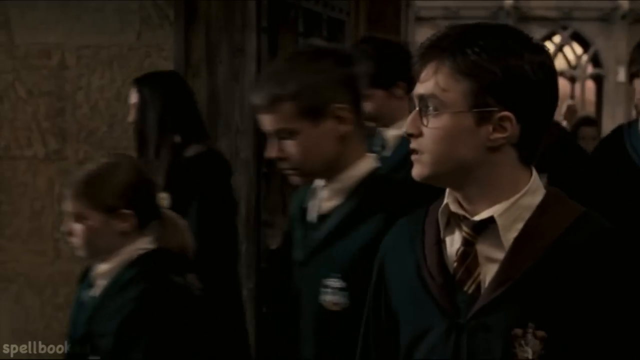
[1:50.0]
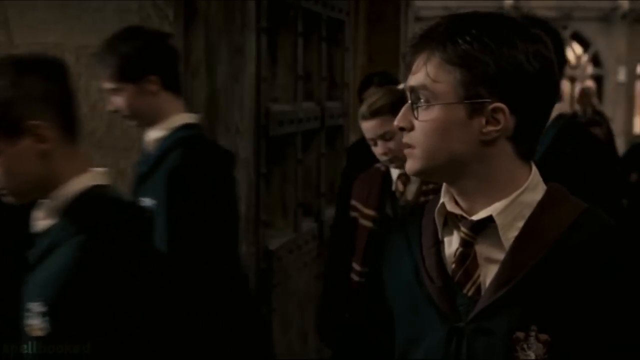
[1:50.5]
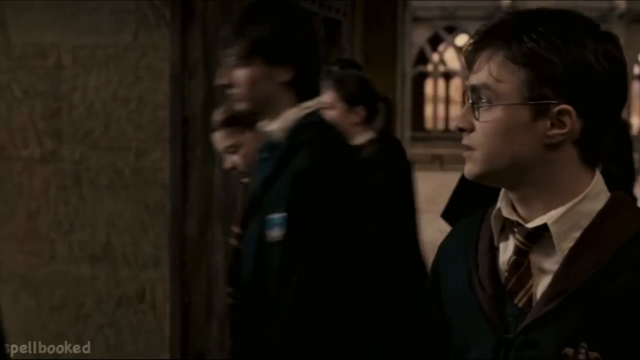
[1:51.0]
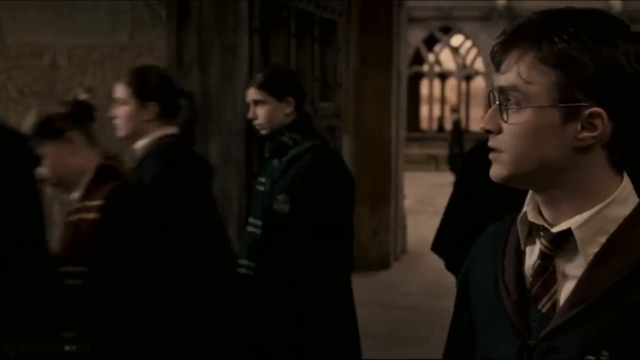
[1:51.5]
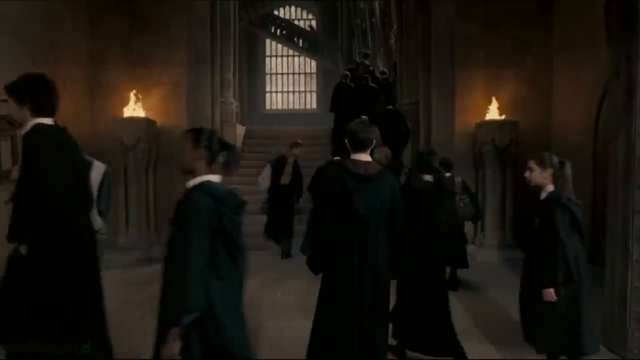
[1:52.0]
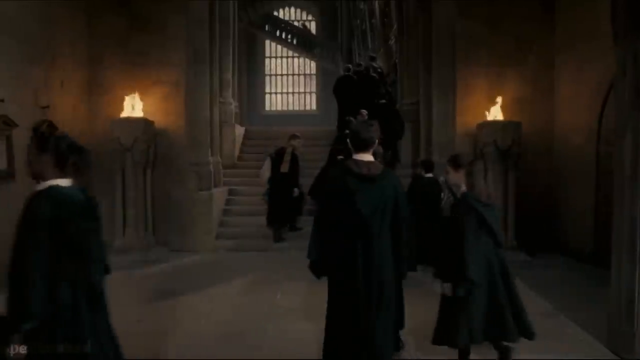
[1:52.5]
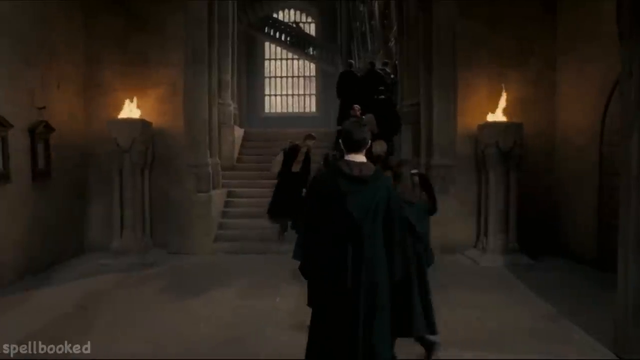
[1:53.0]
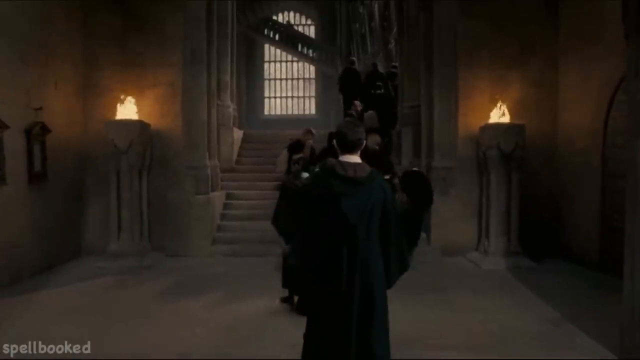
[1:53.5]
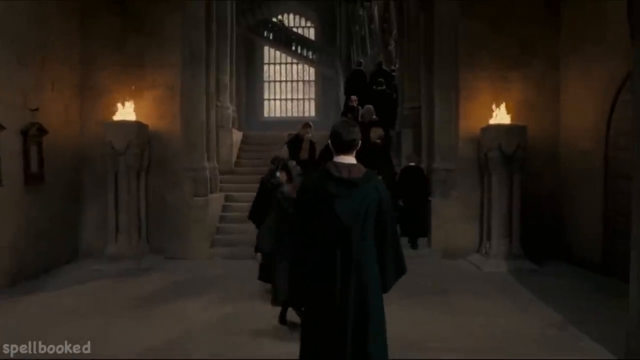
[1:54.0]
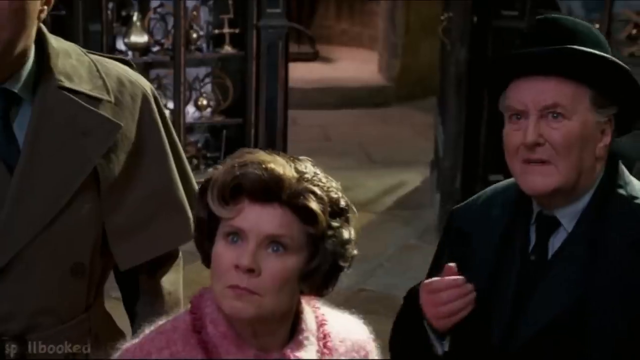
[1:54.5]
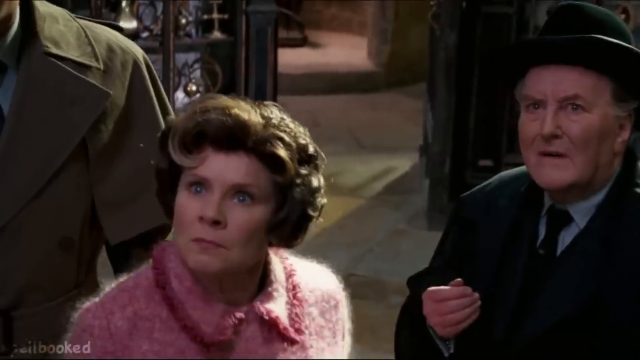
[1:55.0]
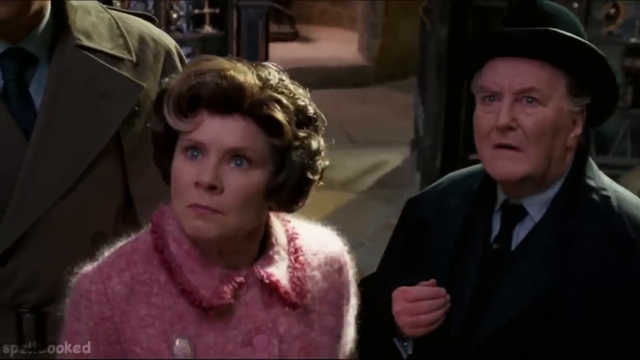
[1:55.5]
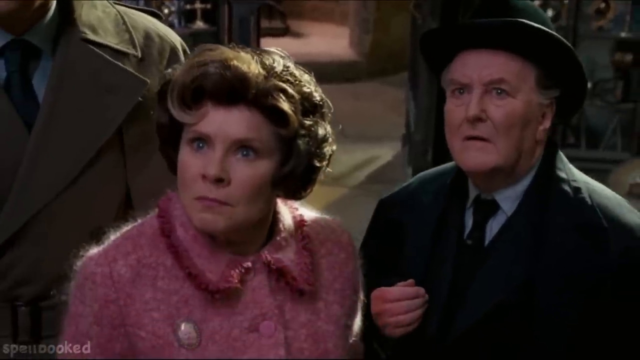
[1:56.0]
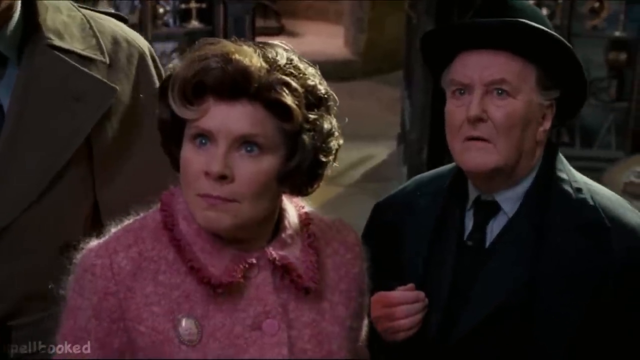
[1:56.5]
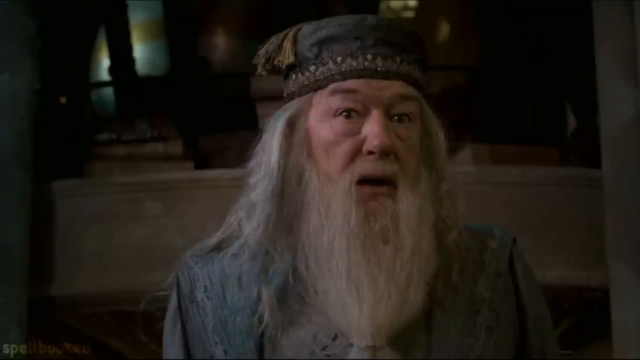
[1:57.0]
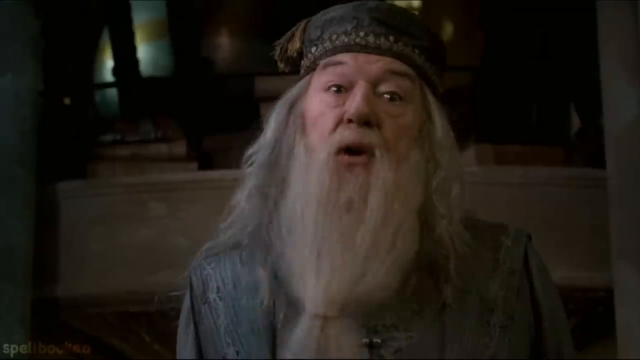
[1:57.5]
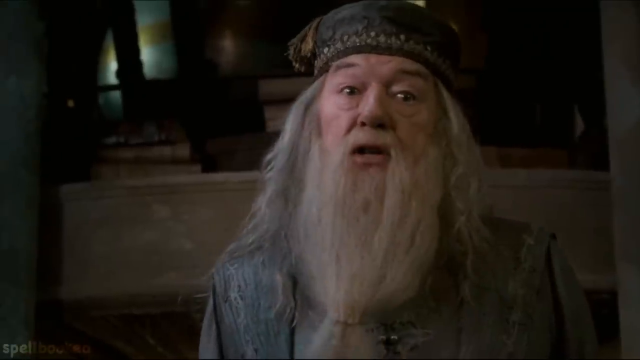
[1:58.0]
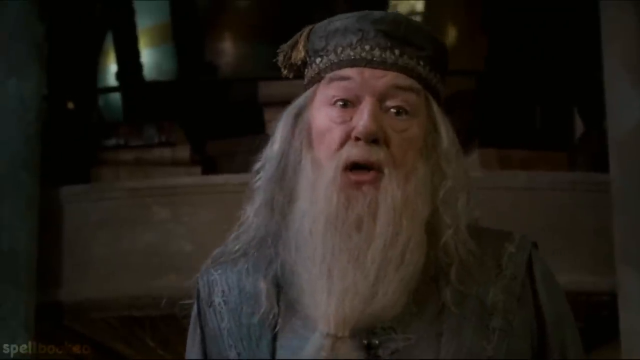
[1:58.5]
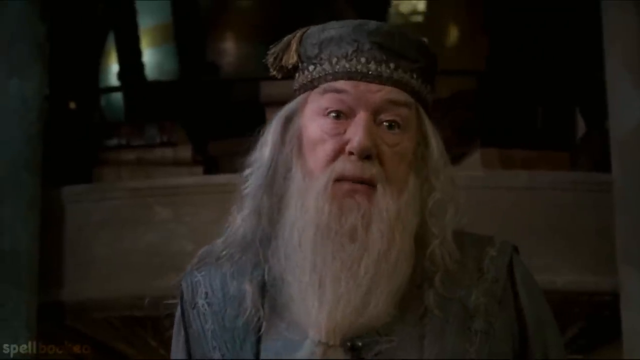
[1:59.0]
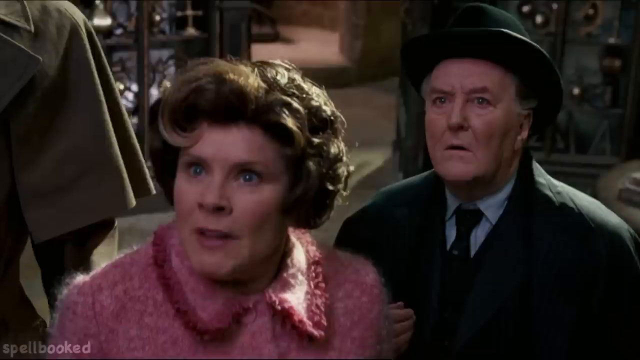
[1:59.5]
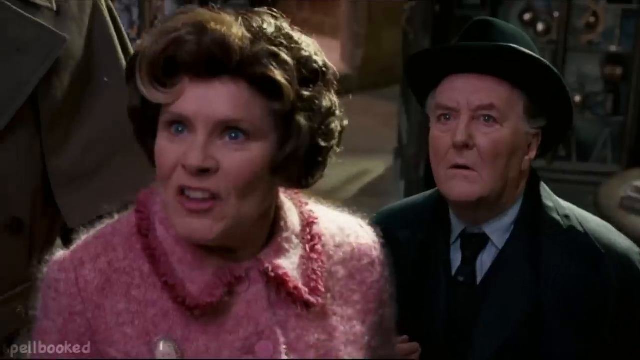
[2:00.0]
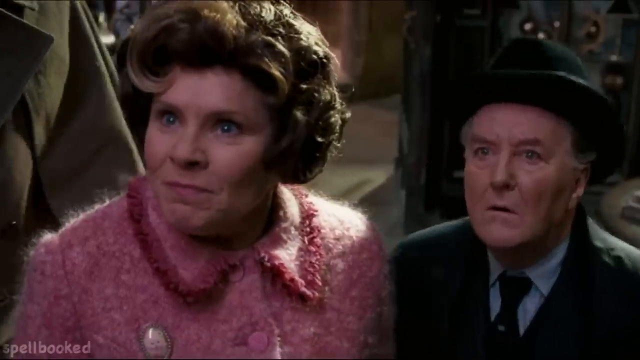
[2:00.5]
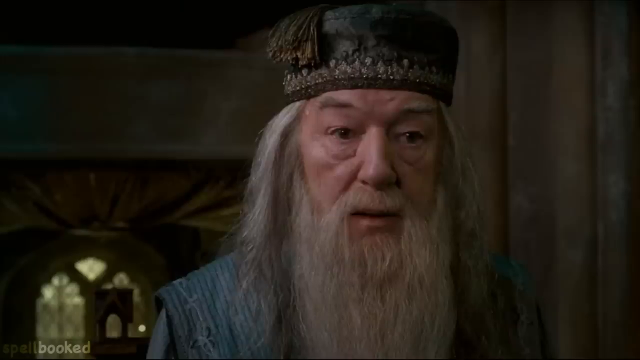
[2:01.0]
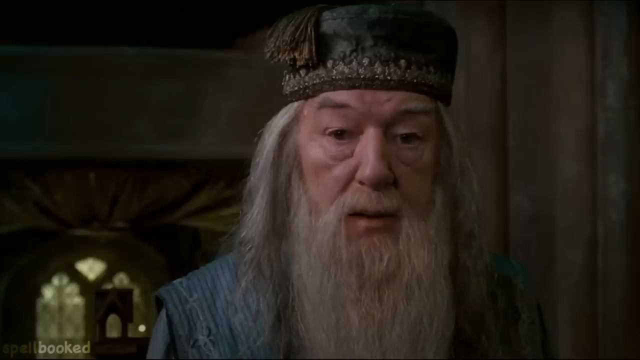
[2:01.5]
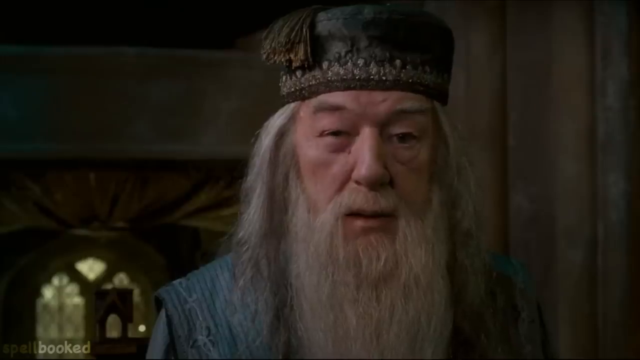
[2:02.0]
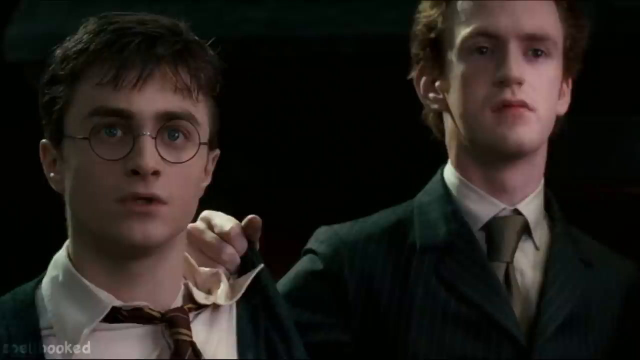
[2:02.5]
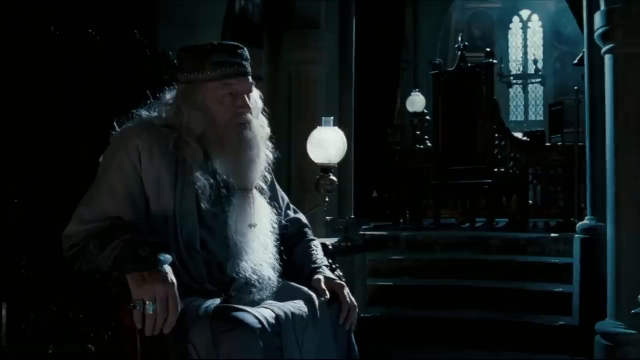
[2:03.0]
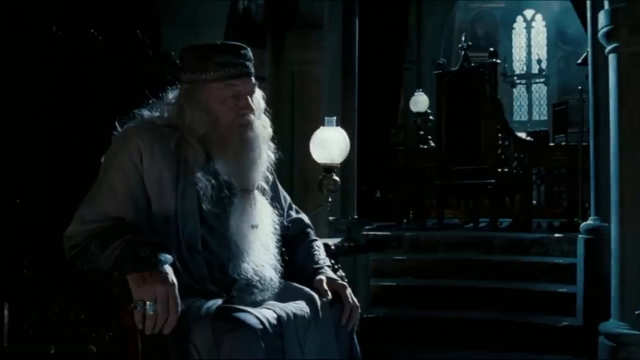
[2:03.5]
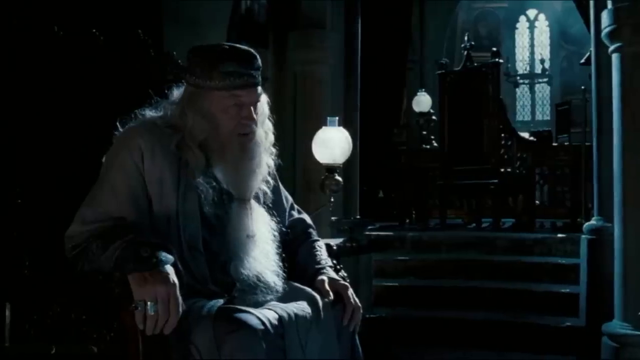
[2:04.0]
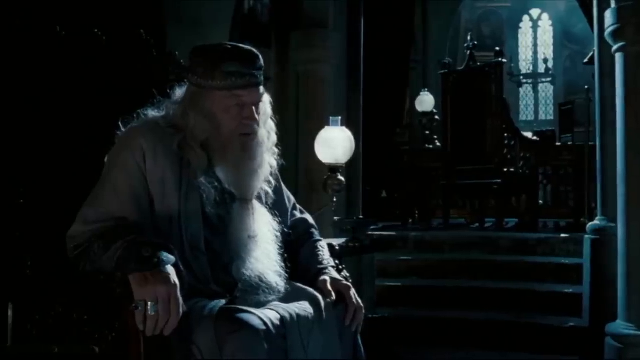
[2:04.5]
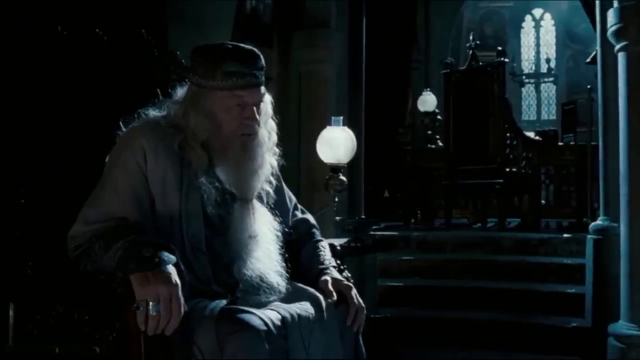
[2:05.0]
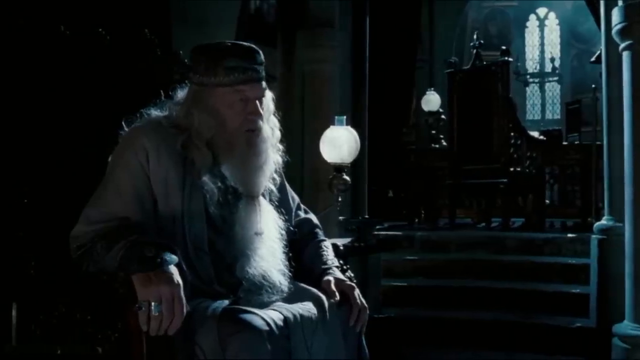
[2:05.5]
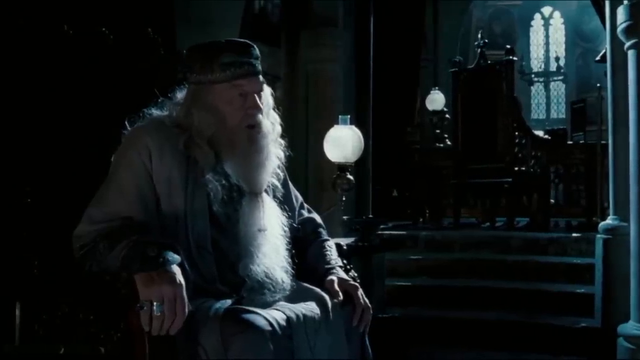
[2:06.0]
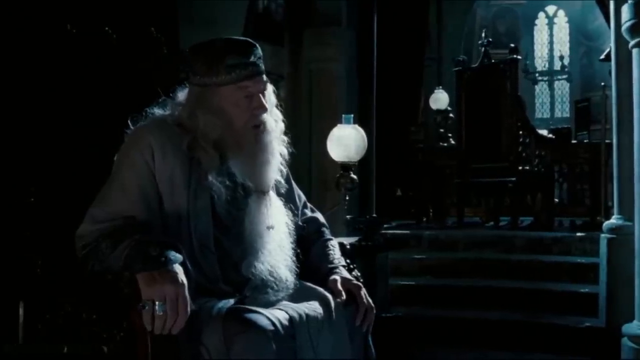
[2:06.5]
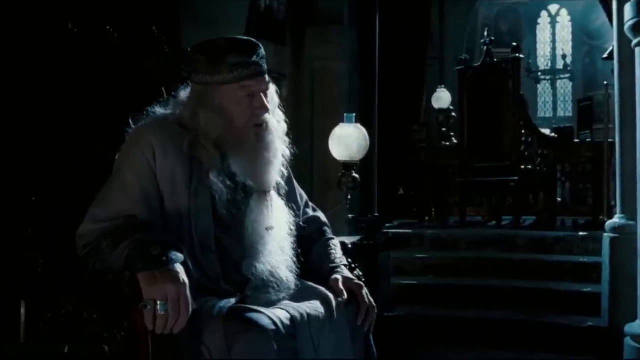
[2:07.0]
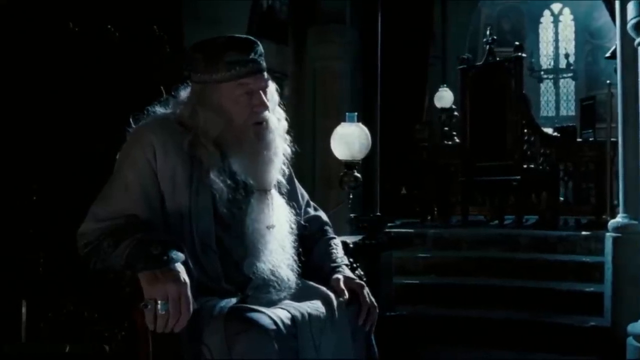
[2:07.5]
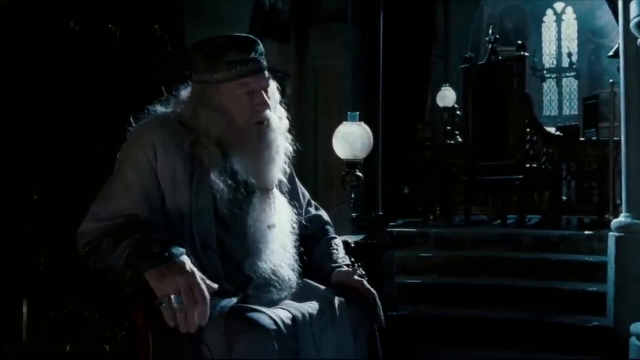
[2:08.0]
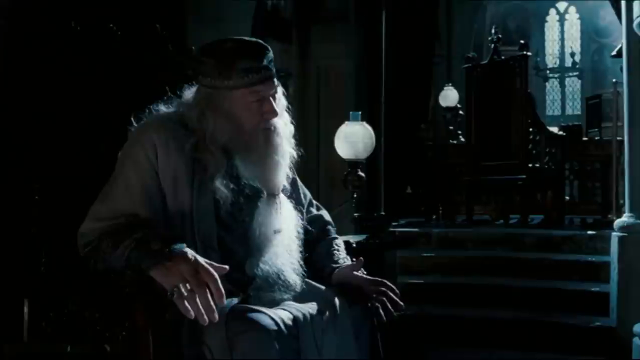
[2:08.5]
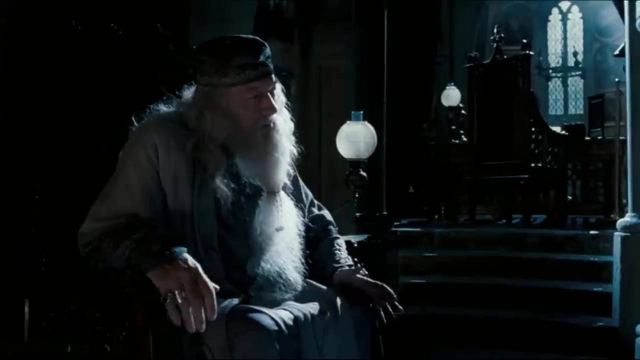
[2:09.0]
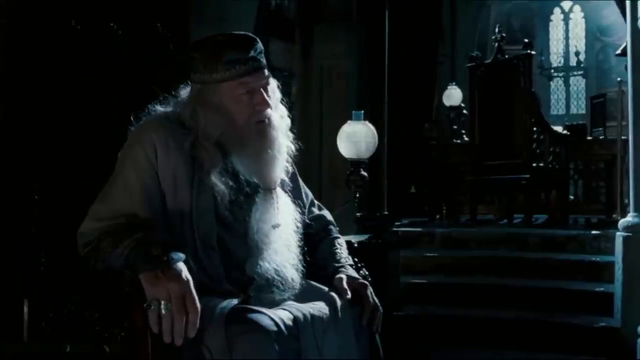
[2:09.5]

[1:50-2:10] Harry, having tried to catch up with Dumbledore, stands still while the other students walk ahead of him. The scene switches to some people from the ministry: Professor Umbridge, the Minister of Magic and another man, all looking up at something and looking very angry. Then Dumbledore is talking. Professor Umbridge walks a step closer with a very smirky, angry look on her face. Dumbledore just stands there and winks one eye at Harry Potter, while a person standing next to him looks like he has him by the shoulder. The scene switches back to night, where Dumbledore appears to be sitting in a chair, talking to someone.